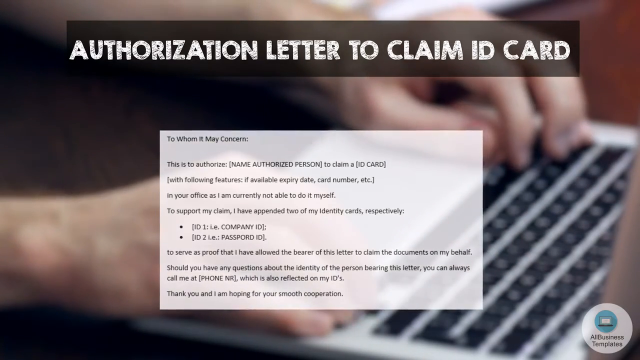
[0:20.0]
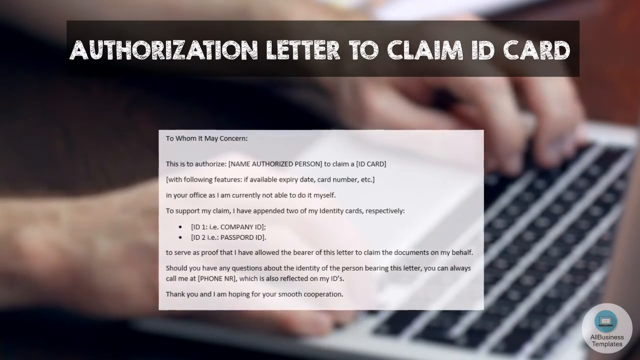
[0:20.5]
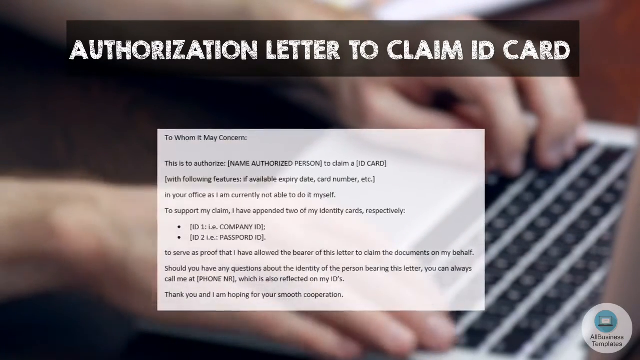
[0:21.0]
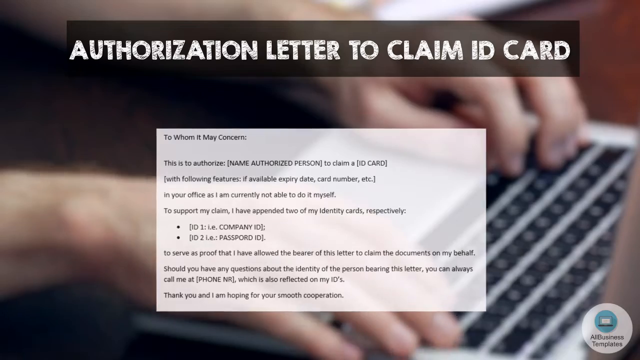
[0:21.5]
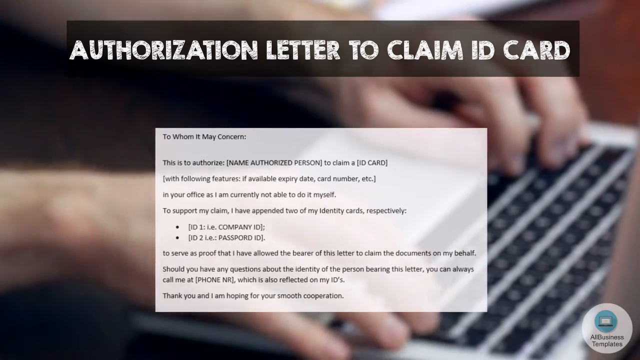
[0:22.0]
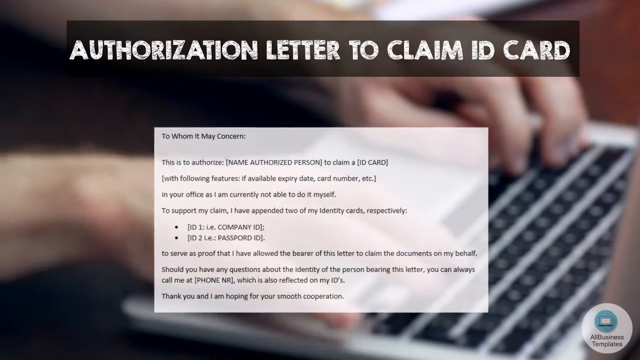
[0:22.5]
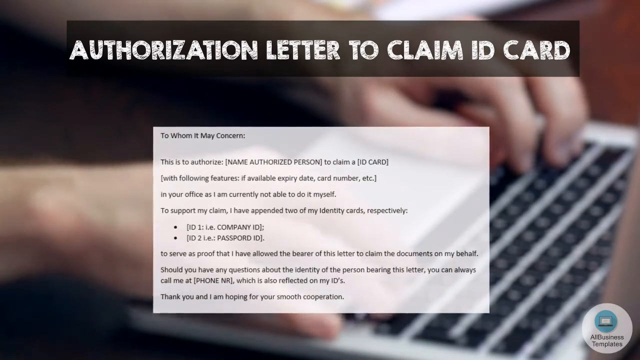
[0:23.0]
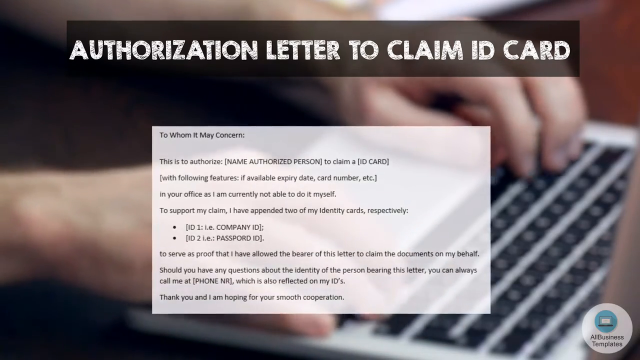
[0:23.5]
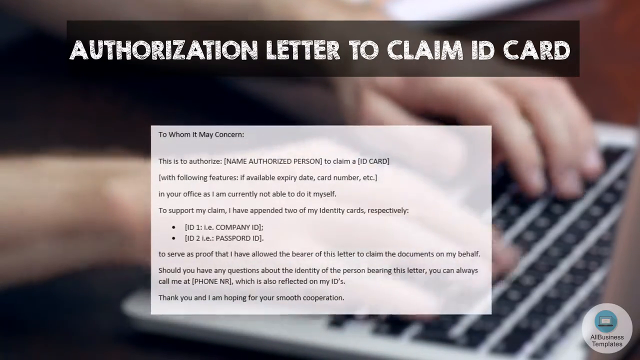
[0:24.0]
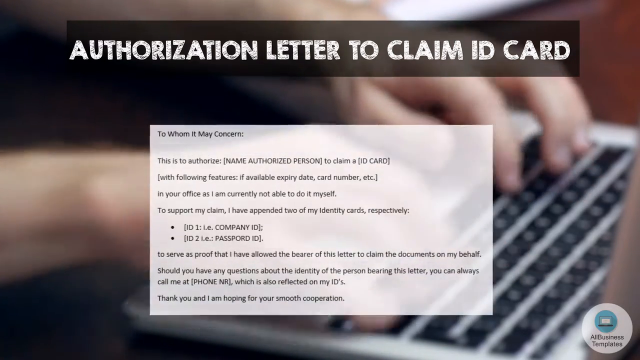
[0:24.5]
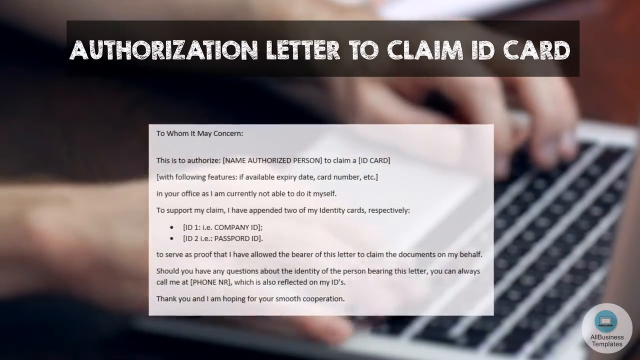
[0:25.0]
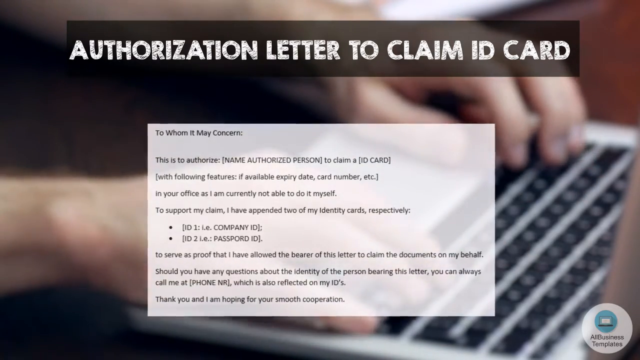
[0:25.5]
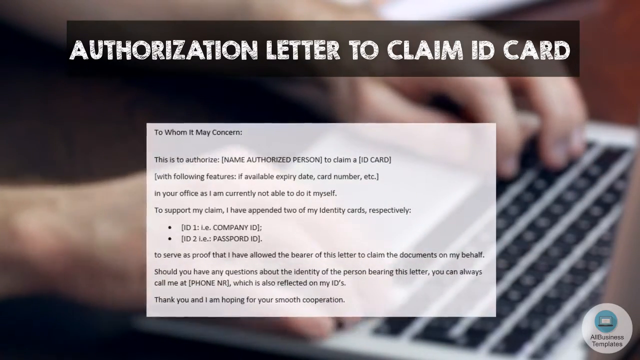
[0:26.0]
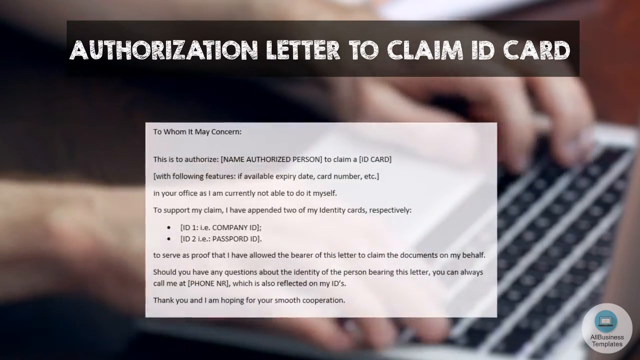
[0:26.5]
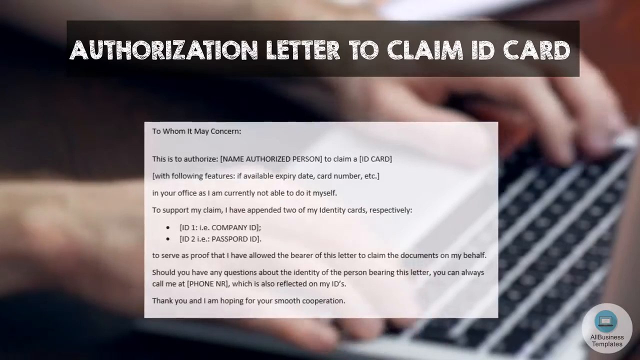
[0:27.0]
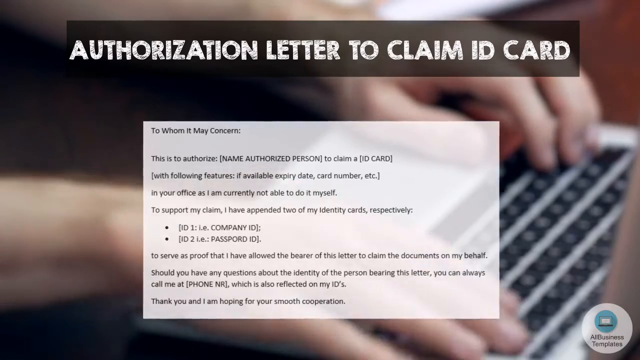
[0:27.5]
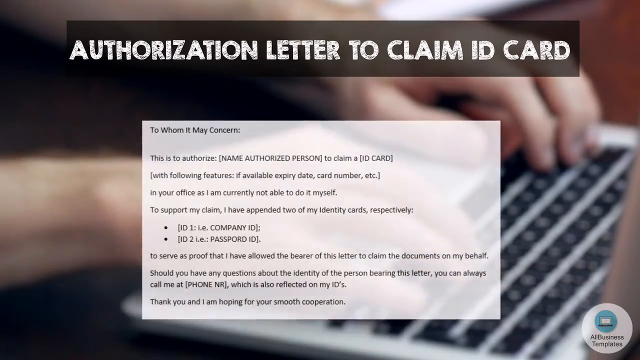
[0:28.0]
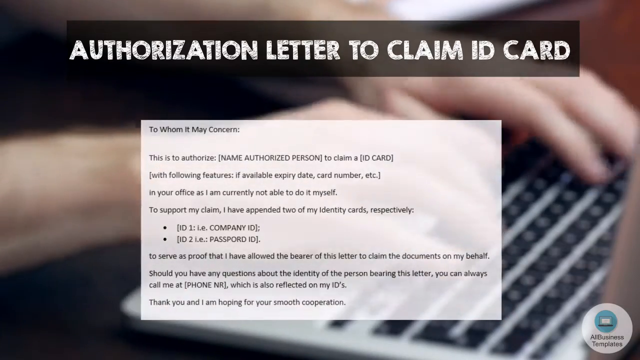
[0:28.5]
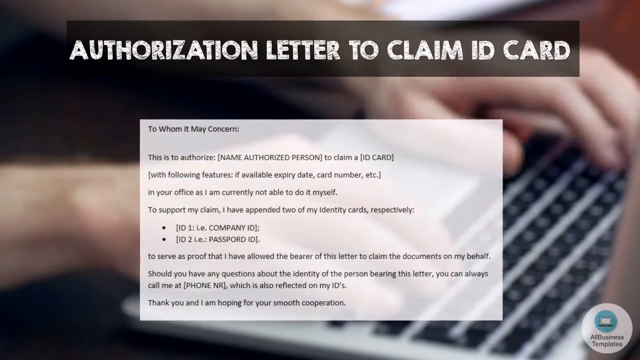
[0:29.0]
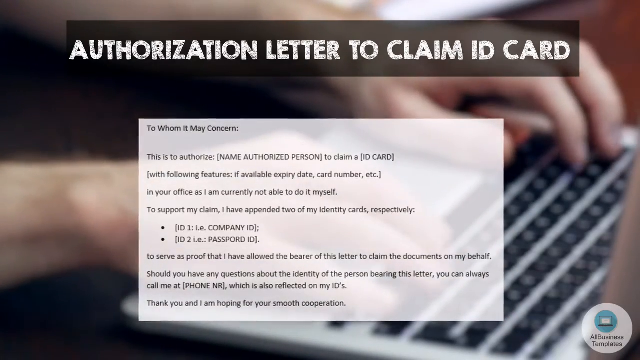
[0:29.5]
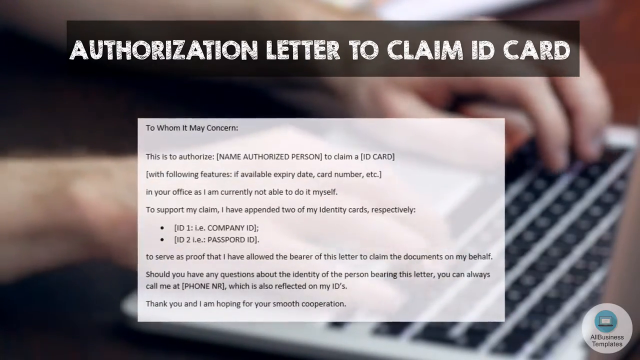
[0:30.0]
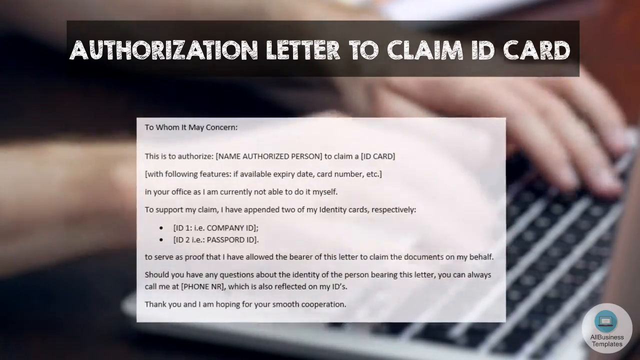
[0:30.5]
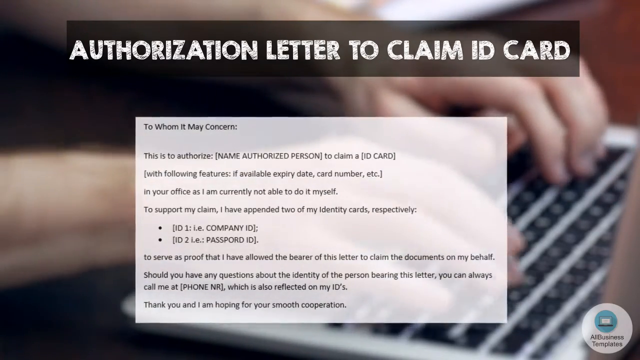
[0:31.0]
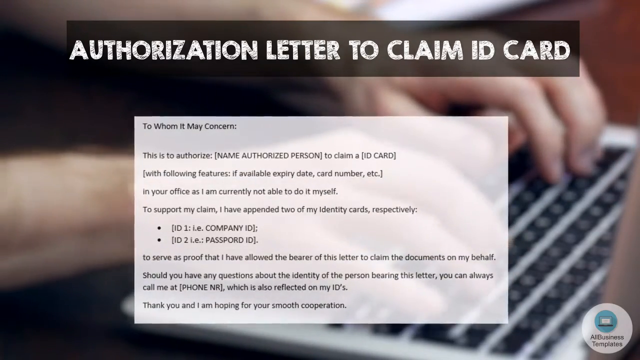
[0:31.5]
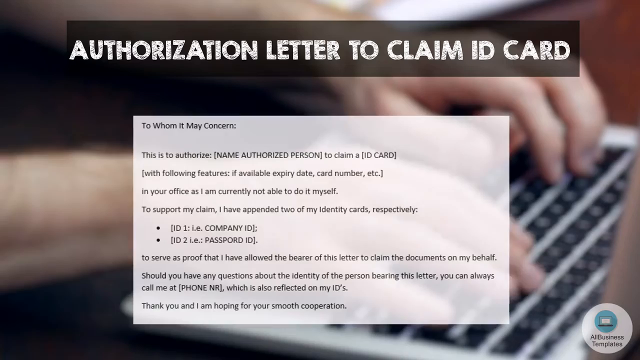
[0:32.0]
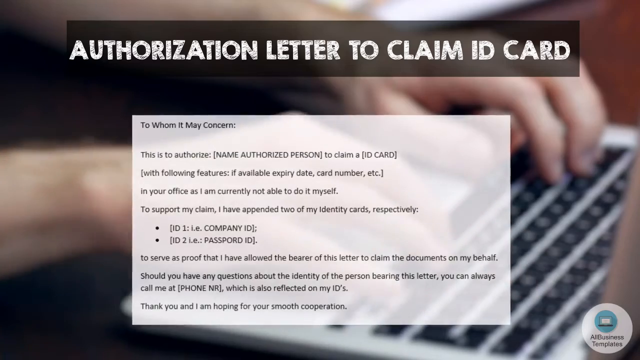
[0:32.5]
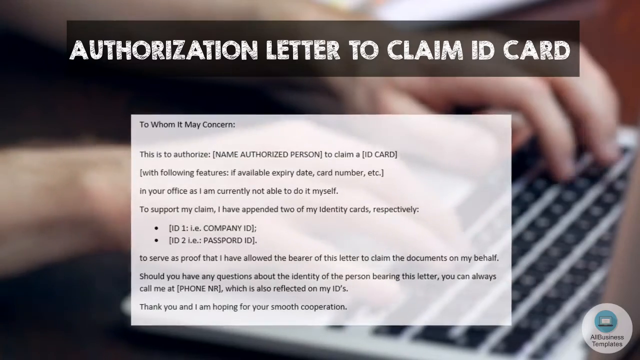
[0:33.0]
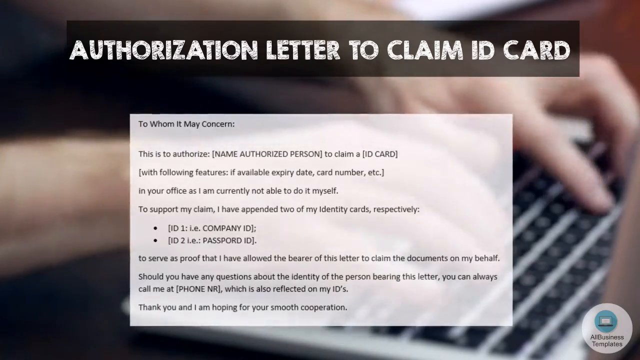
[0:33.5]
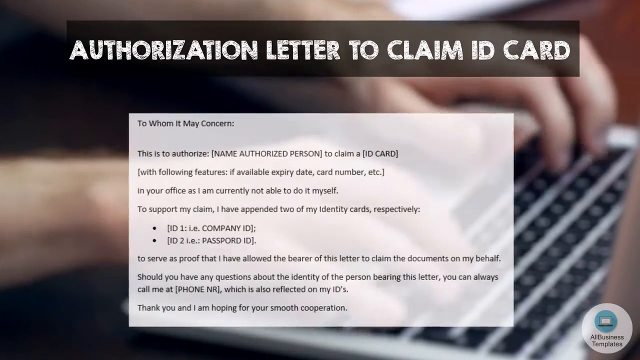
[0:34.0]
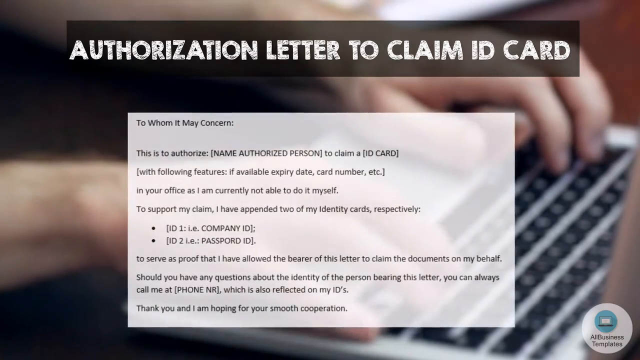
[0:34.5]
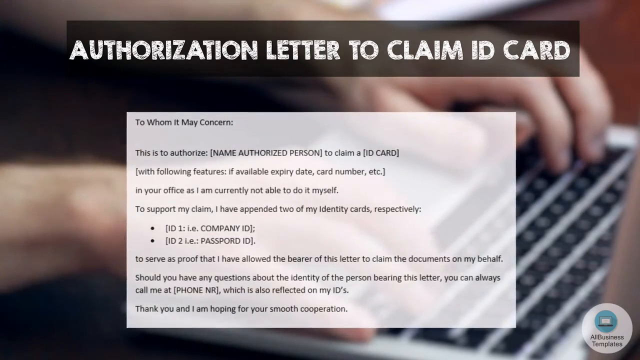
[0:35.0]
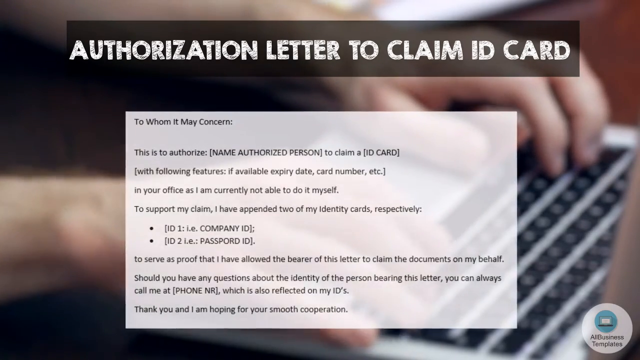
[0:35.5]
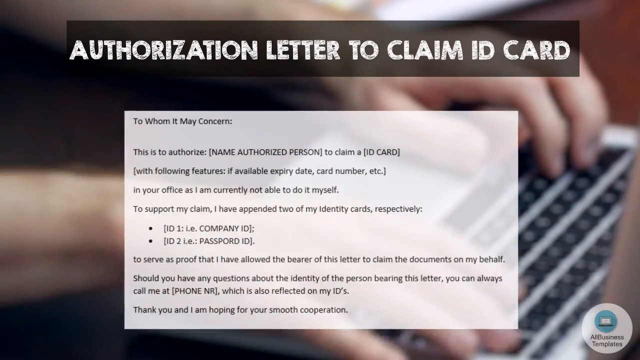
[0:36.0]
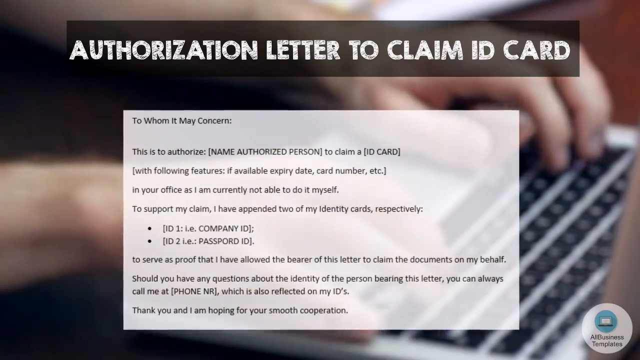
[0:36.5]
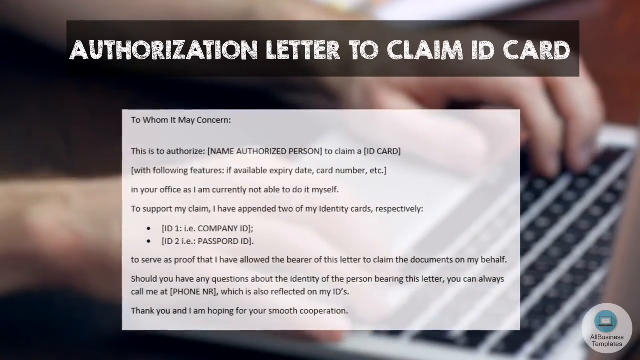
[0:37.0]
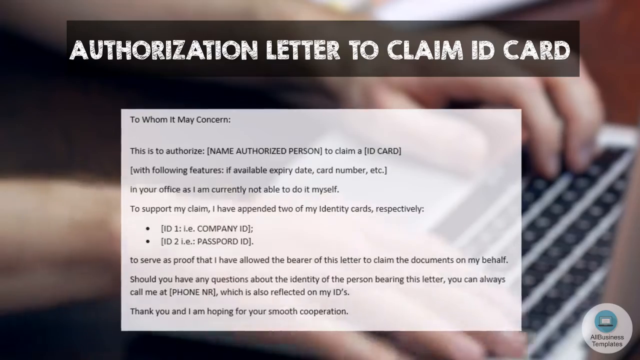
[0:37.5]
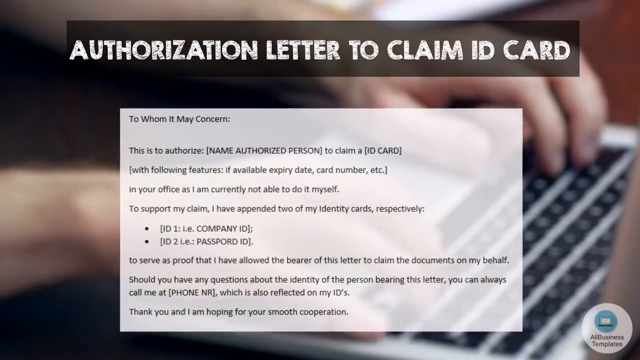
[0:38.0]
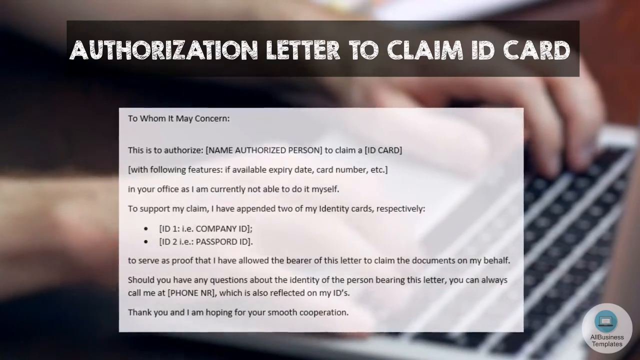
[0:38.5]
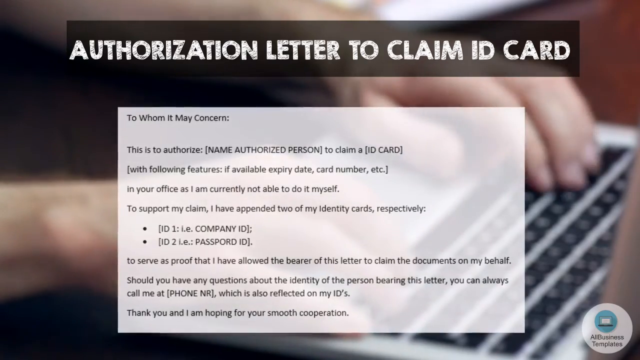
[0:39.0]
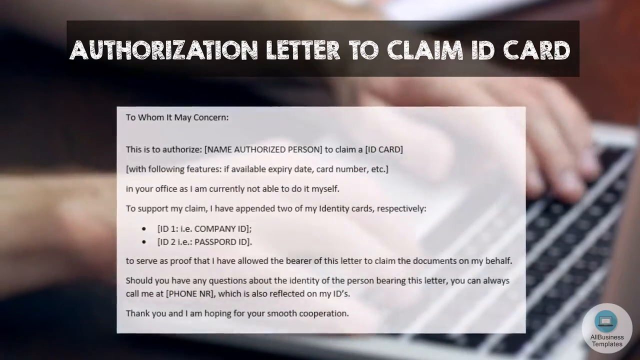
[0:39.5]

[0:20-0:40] Text at the top of the screen reads "authorization letter to claim ID card." A laptop is in the center of the screen, and two hands are typing on it. A card in the center of the screen reads "to whom it may concern" and "this is the authorized name, authorized person to claim ID card," followed by instructions on claiming an ID card written out in several paragraphs. The card kind of zooms in and then stops; the hands kind of pause for a second and then resume typing, leaving the text on the card on screen to be read. The bottom section reads "to serve as proof that I have," and then the screen kind of freezes and becomes briefly garbled. When it clears, the text reads "to serve as proof that I have allowed the bearer of this letter to claim the documents on my behalf. Should you have any questions about the identity of the person bearing this letter, you can always call me back, phone number." Throughout, the person in the background keeps typing.